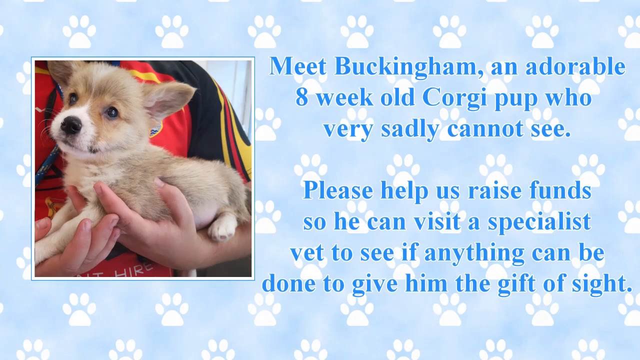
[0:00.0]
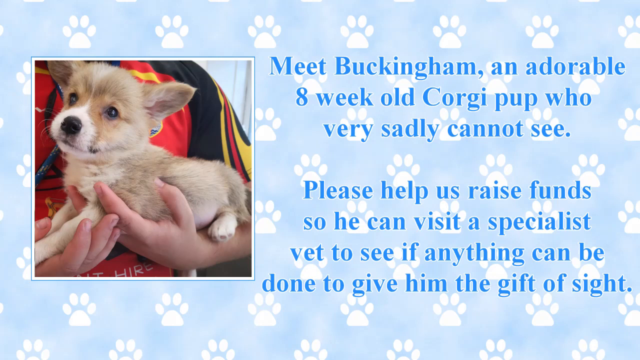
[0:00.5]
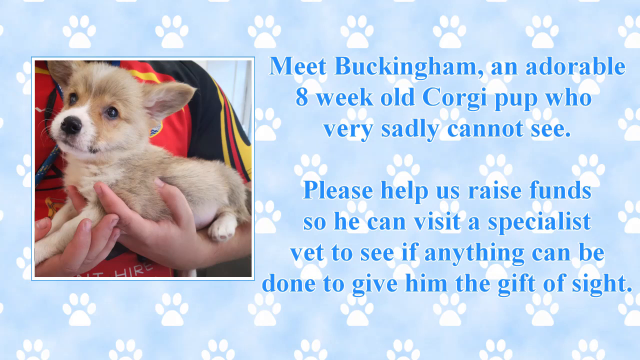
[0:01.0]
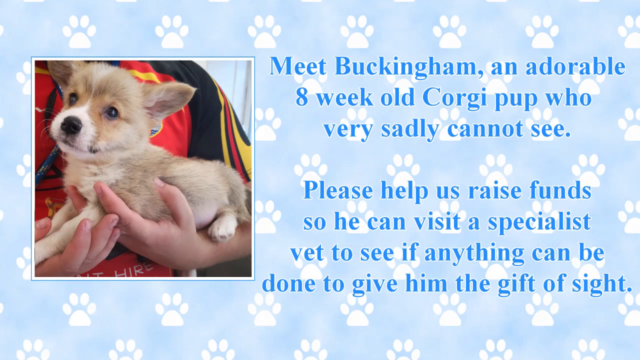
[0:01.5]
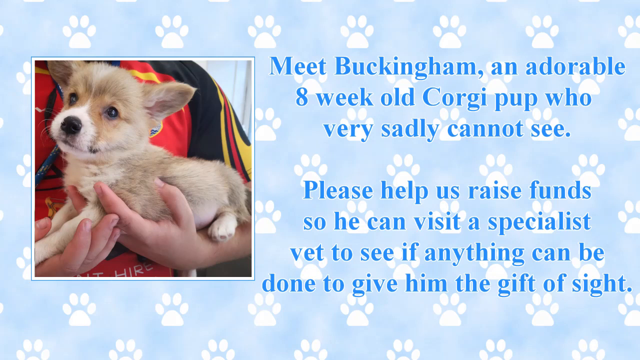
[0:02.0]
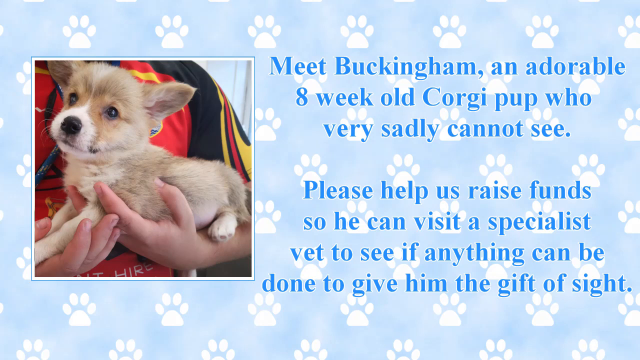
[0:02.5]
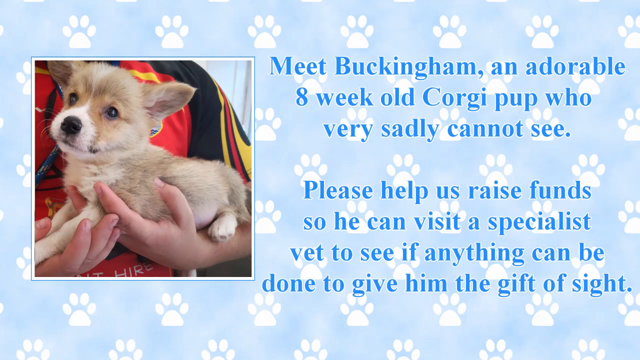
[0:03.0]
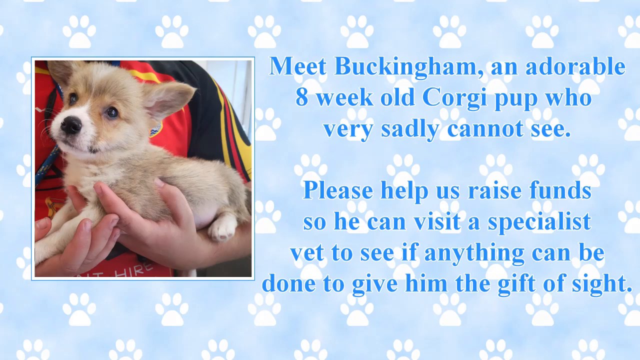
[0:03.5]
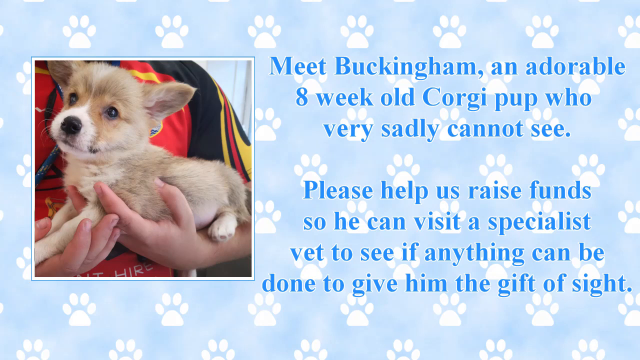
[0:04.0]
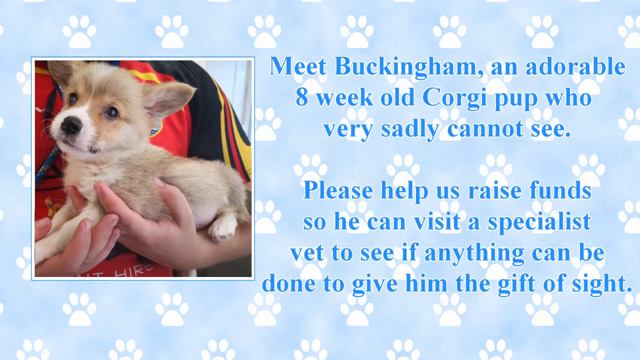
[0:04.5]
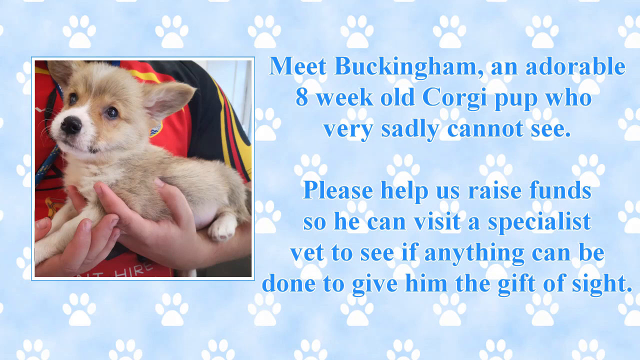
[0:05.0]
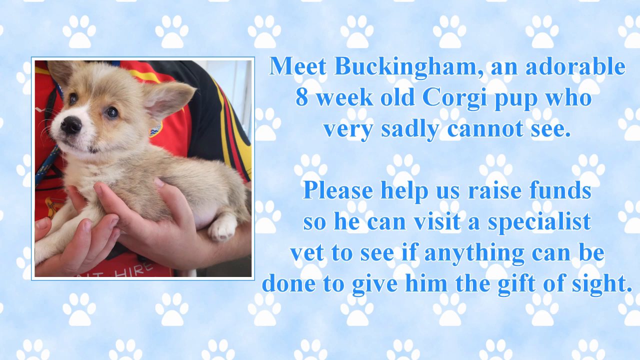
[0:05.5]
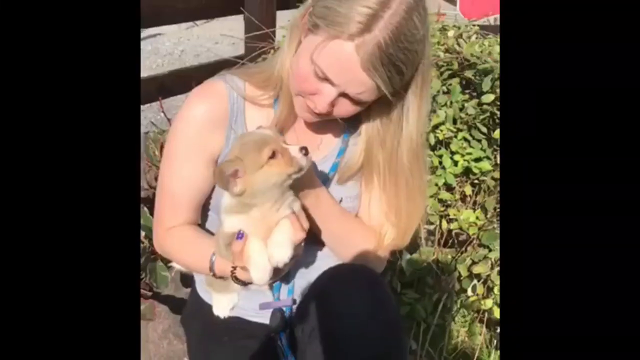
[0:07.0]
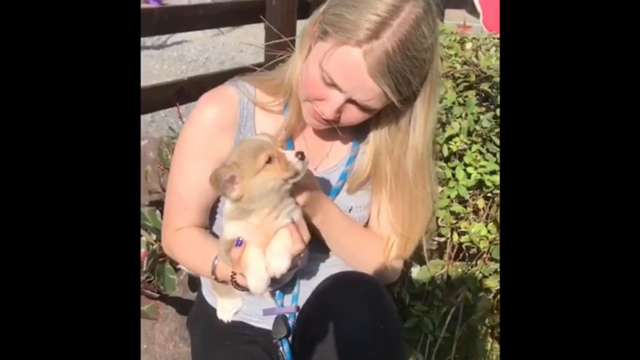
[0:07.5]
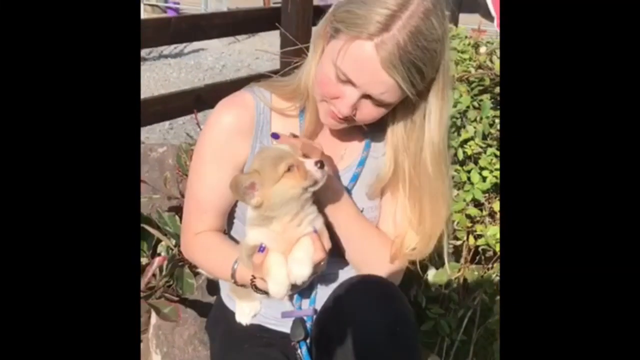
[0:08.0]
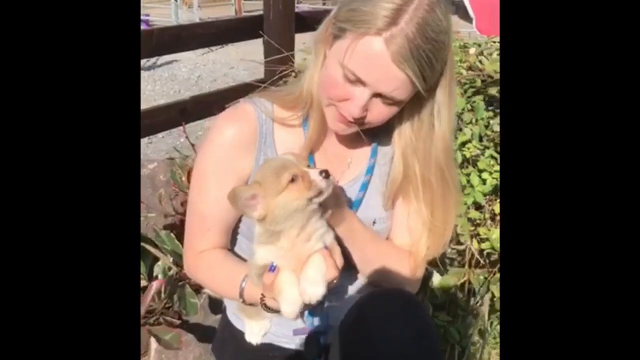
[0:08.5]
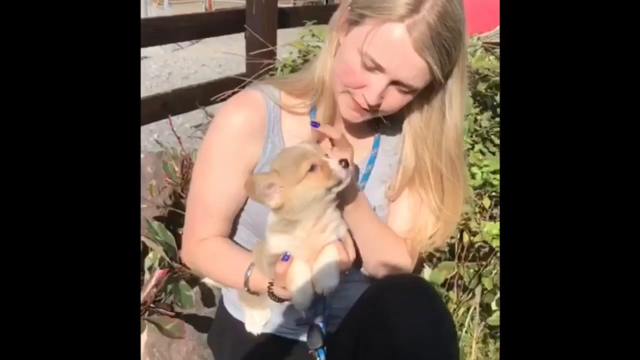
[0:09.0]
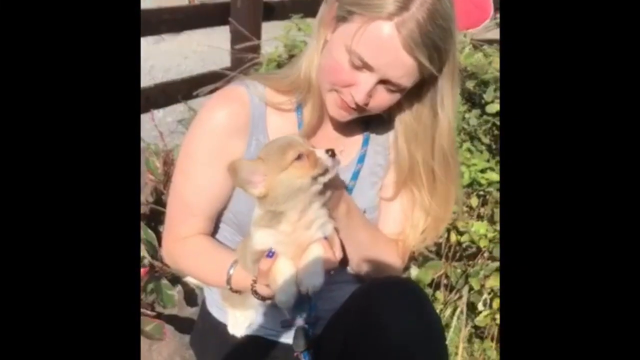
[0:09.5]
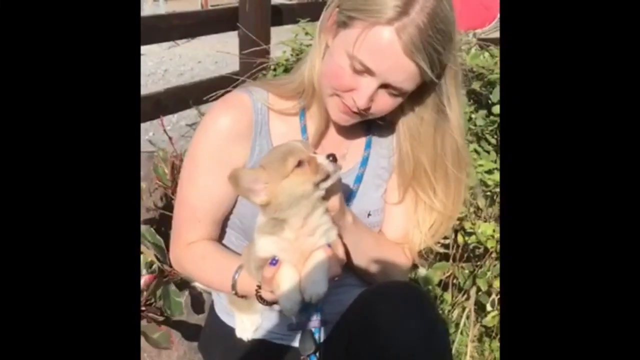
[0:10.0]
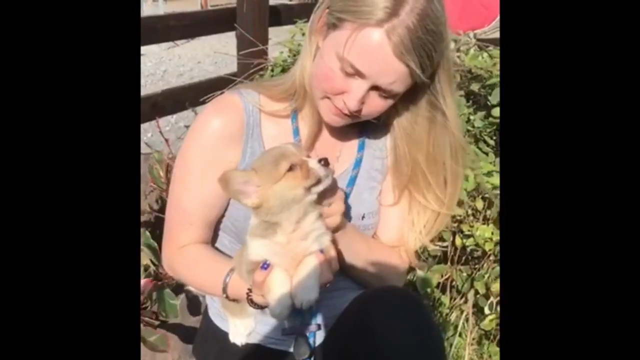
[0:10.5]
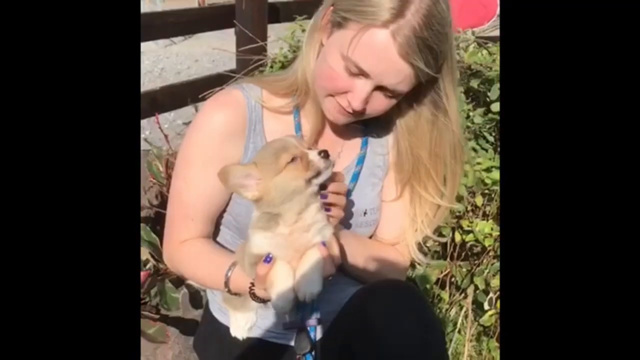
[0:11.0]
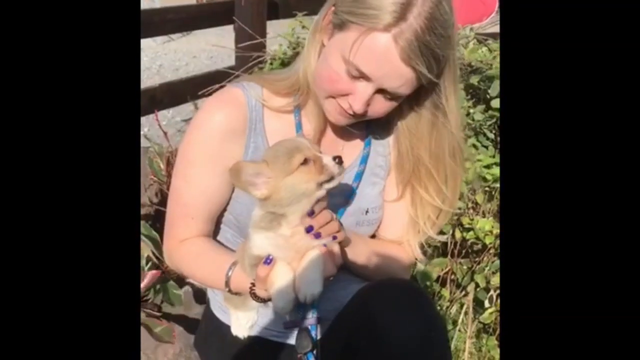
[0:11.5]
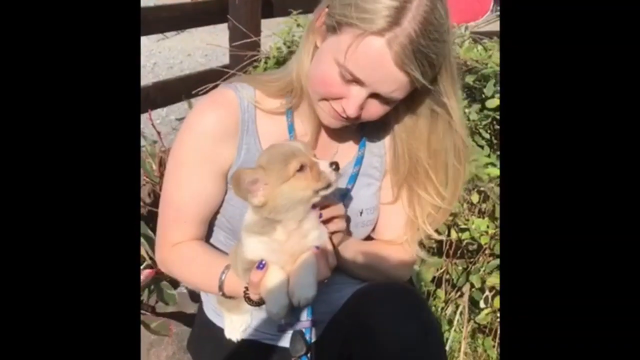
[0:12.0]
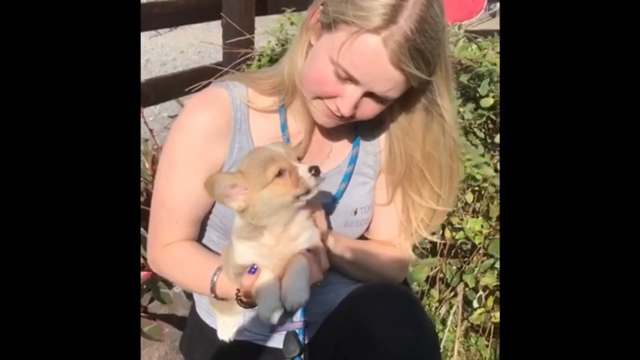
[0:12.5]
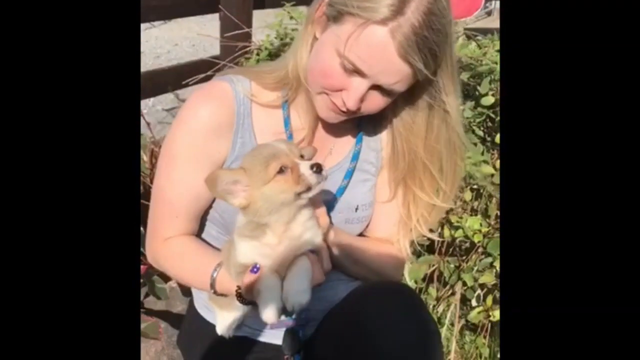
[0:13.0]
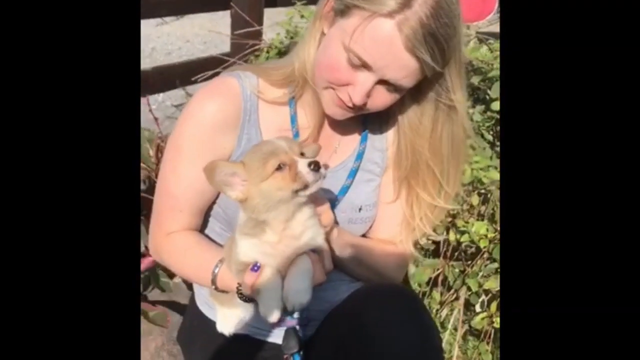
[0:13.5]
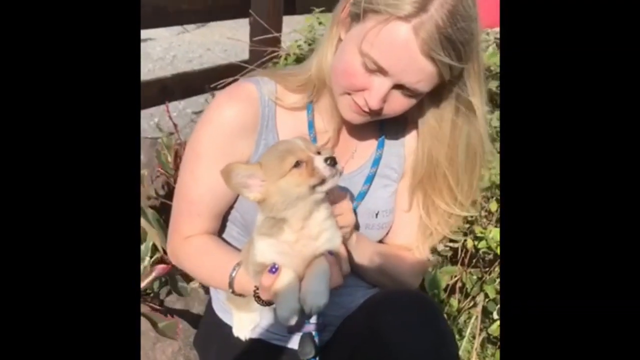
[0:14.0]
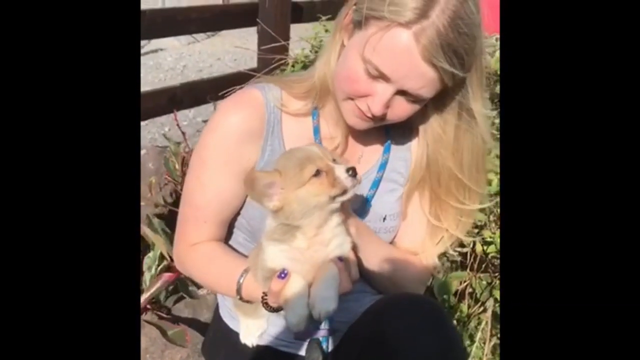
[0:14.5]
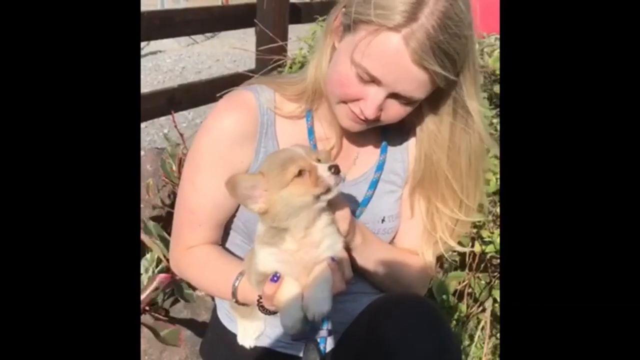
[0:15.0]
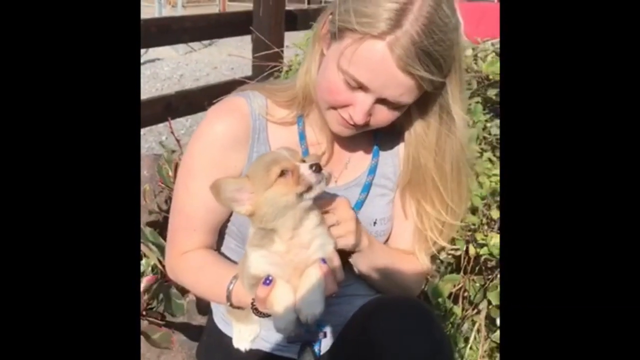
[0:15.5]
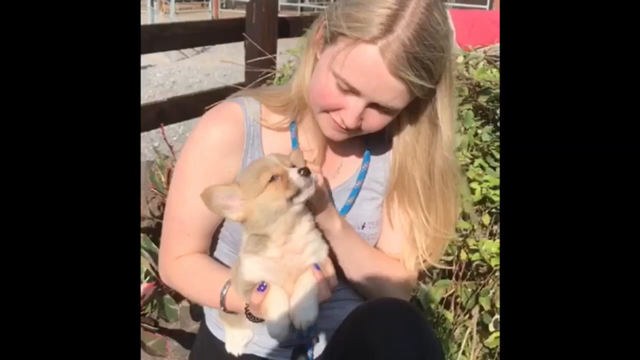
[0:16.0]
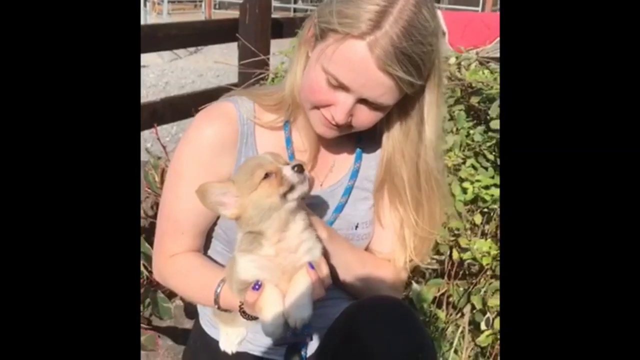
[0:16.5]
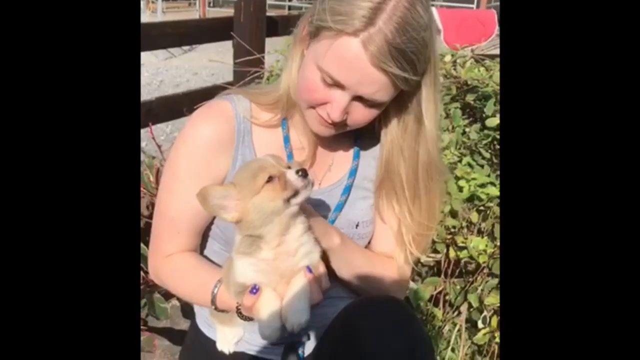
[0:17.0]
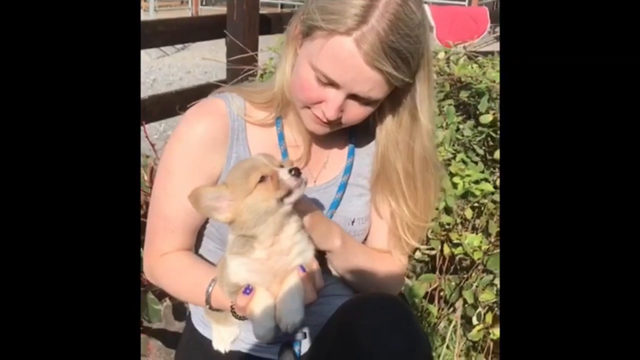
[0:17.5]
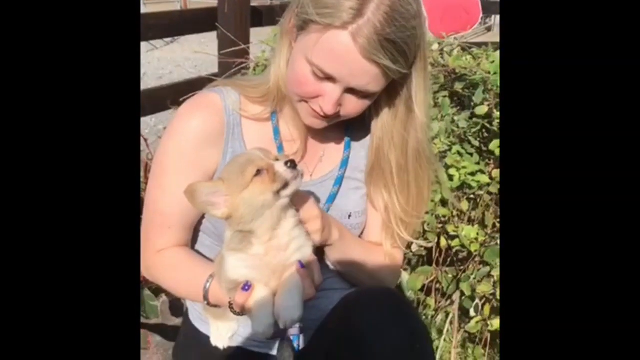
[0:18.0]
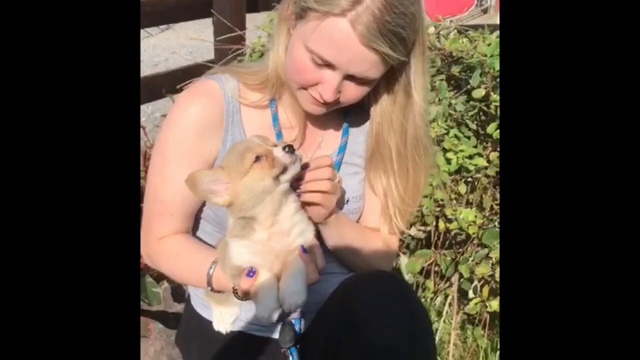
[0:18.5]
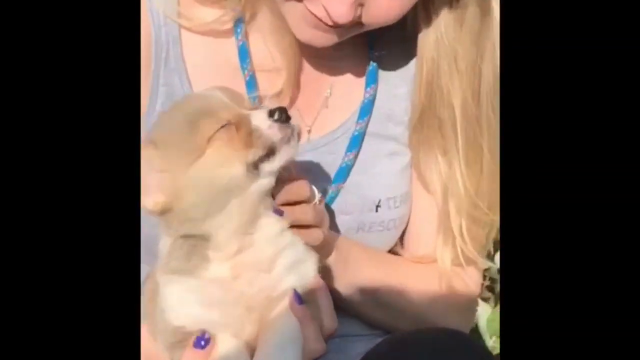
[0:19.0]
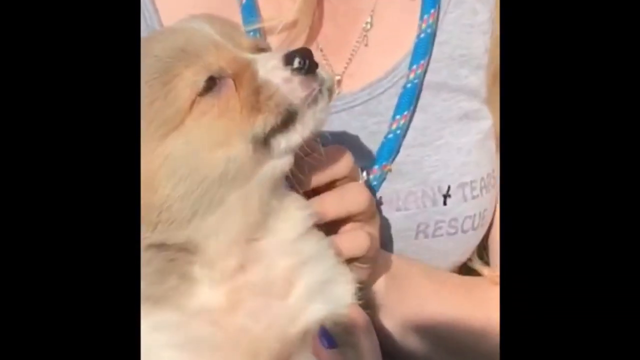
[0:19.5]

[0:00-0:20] Text introduces the subject: "meet Buckingham, an adorable 8-week-old corgi pup, who very sadly cannot see. Please help us raise funds so he can visit a specialist vet to see if anything can be done to give him the gift of sight." A picture of the puppy is at the side, with someone carrying it up. The video then shows footage of a white woman, probably in her late 20s, with blonde hair and purple-painted nails, tending to the puppy, petting it and rubbing it up and down. The pup blinks and looks upward. The place is windy, and the grass around them moves up and down in the air flow.